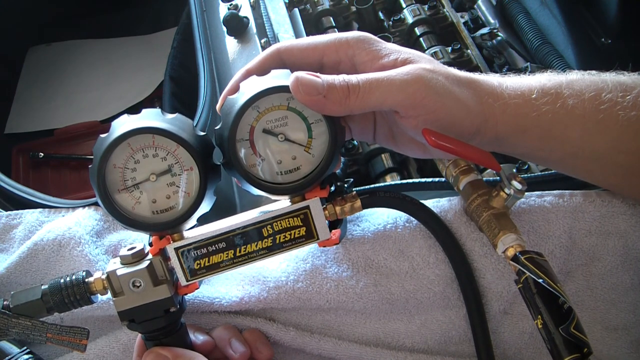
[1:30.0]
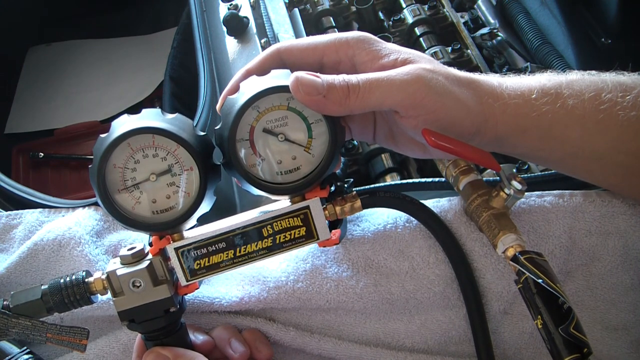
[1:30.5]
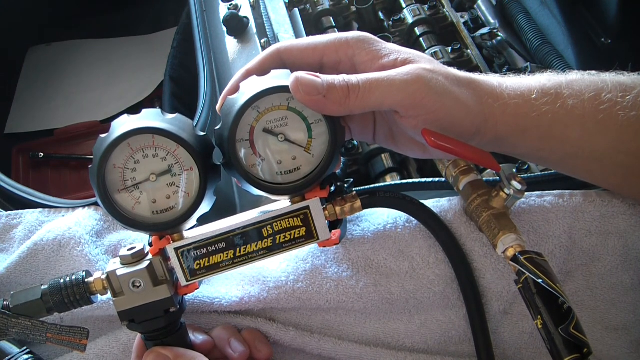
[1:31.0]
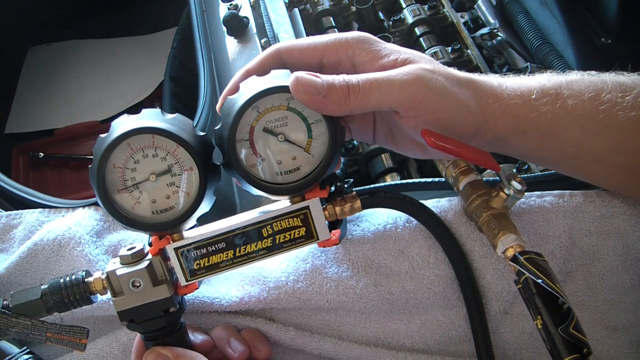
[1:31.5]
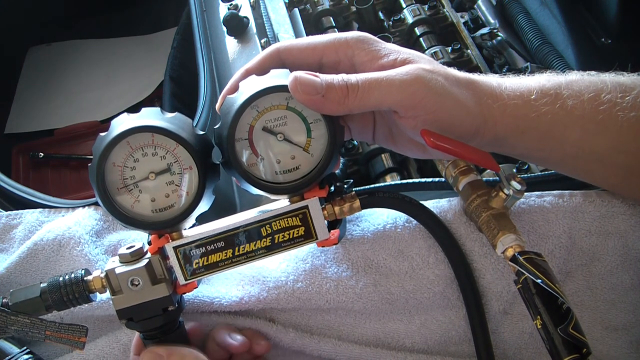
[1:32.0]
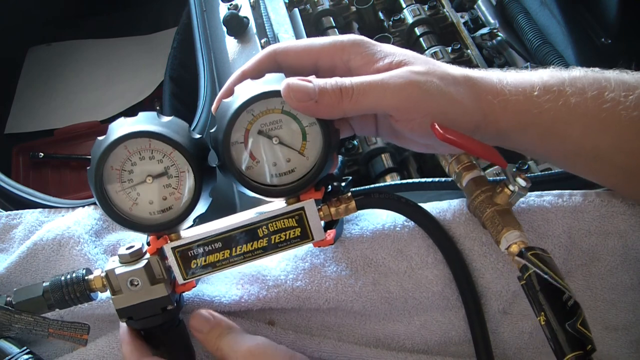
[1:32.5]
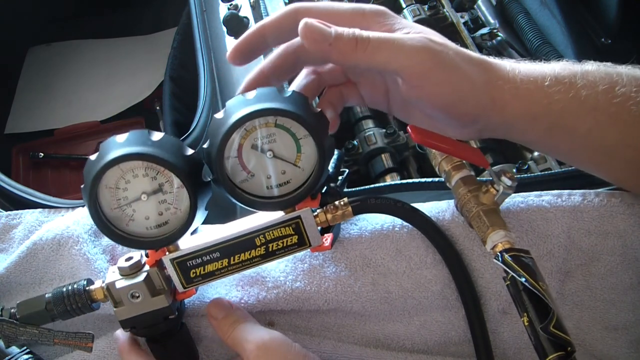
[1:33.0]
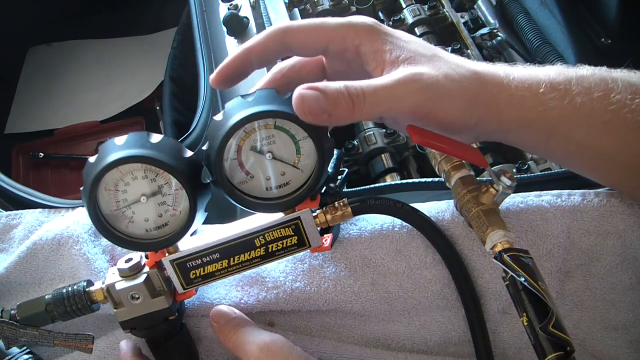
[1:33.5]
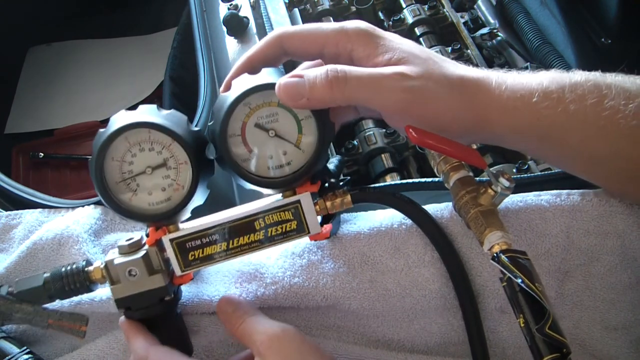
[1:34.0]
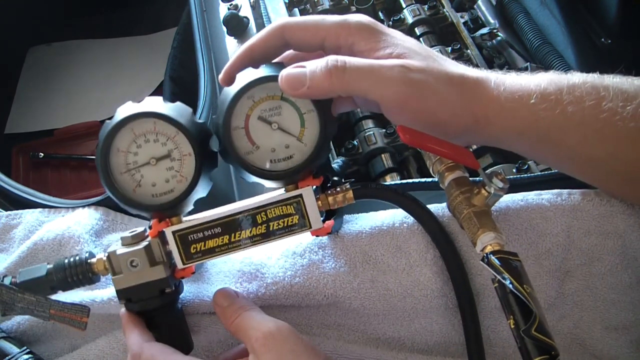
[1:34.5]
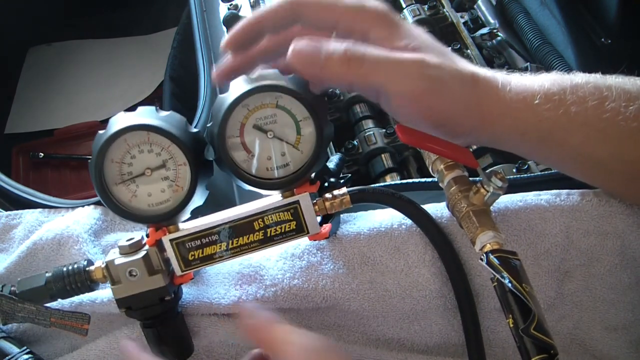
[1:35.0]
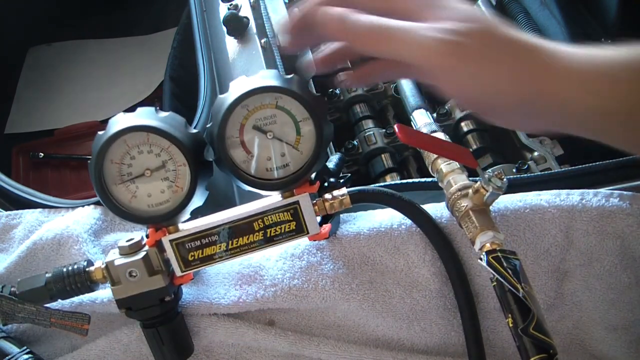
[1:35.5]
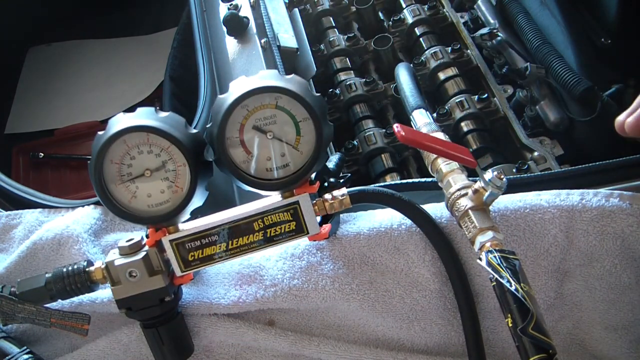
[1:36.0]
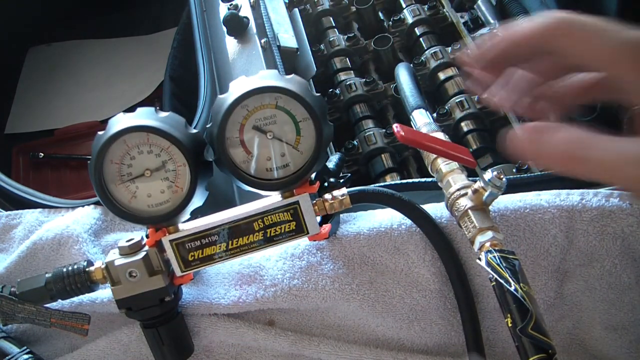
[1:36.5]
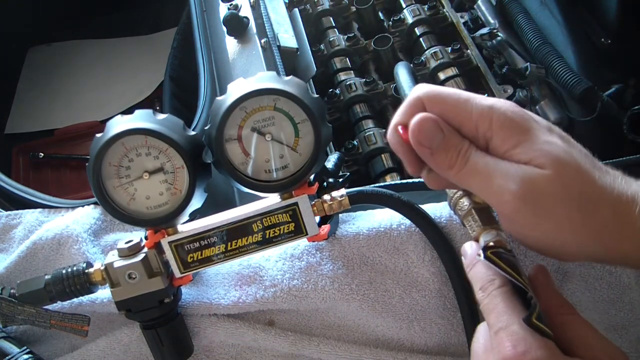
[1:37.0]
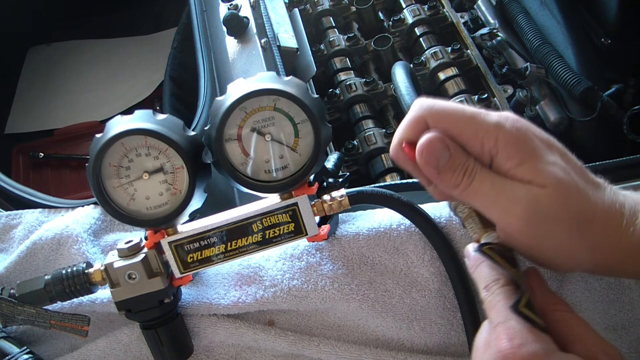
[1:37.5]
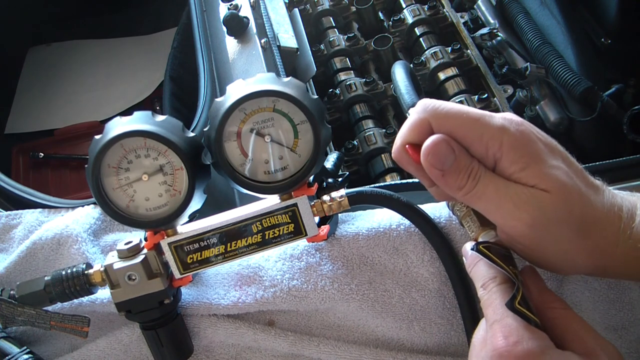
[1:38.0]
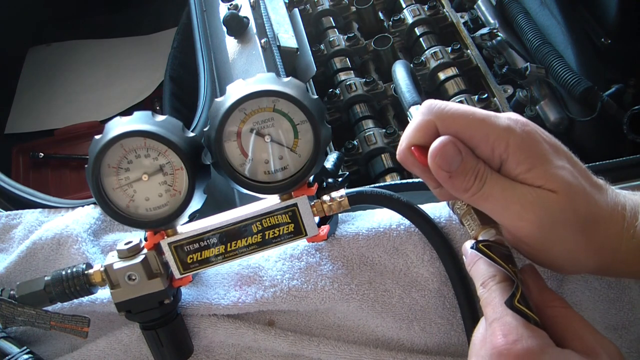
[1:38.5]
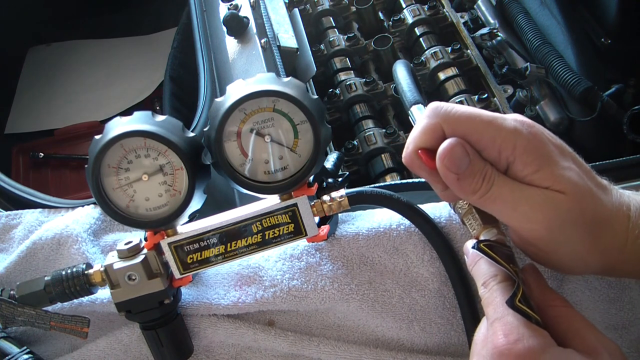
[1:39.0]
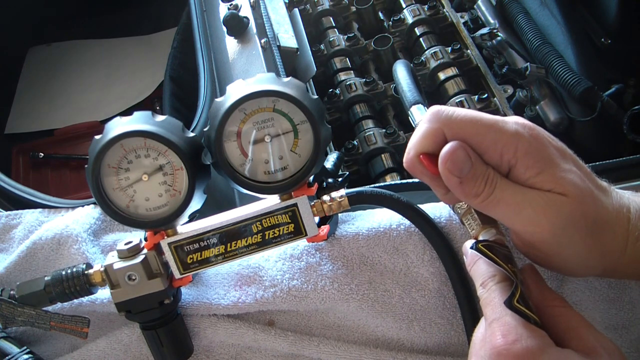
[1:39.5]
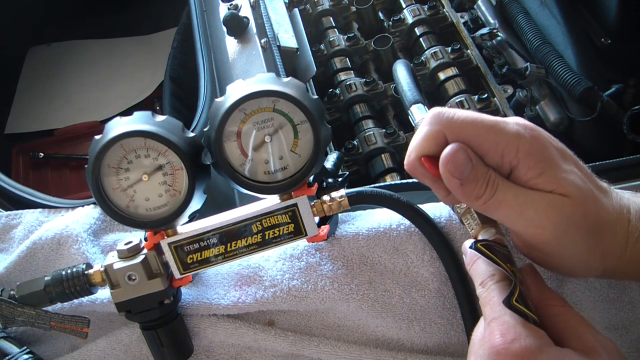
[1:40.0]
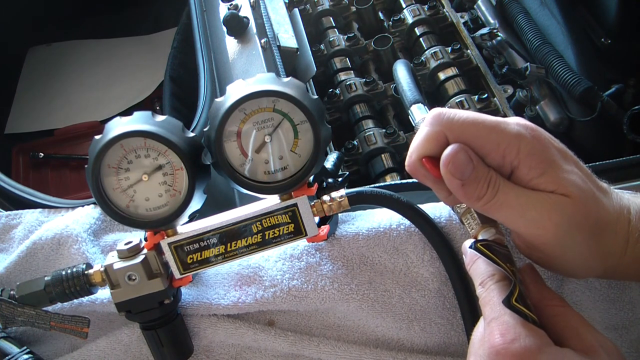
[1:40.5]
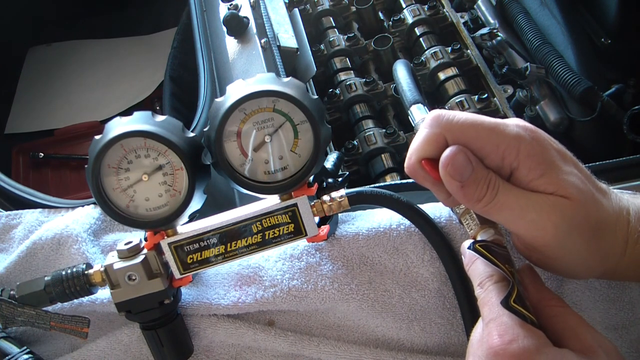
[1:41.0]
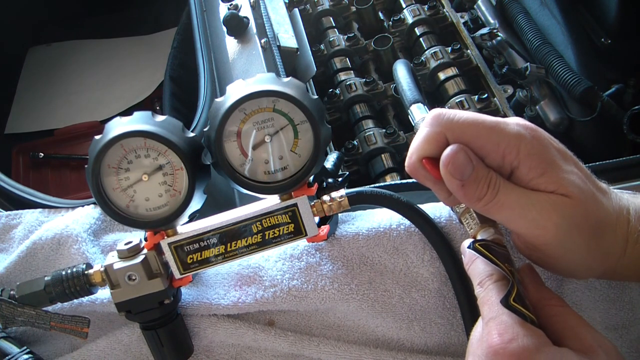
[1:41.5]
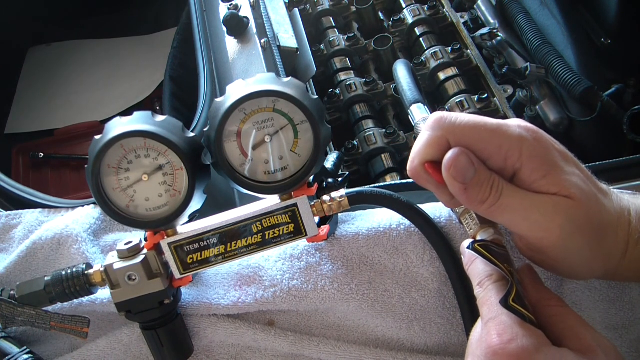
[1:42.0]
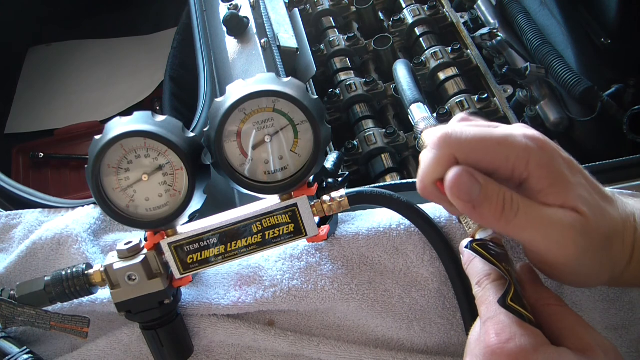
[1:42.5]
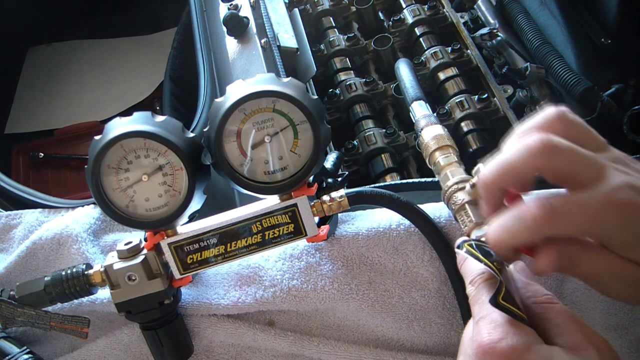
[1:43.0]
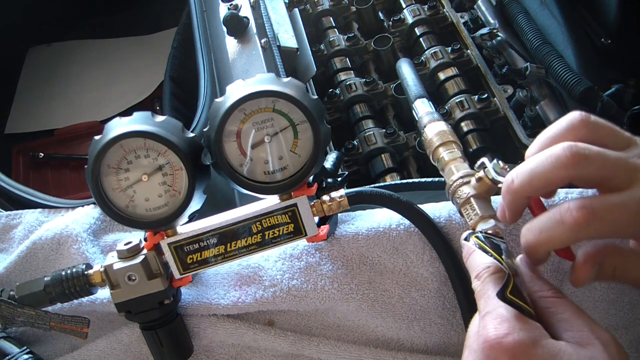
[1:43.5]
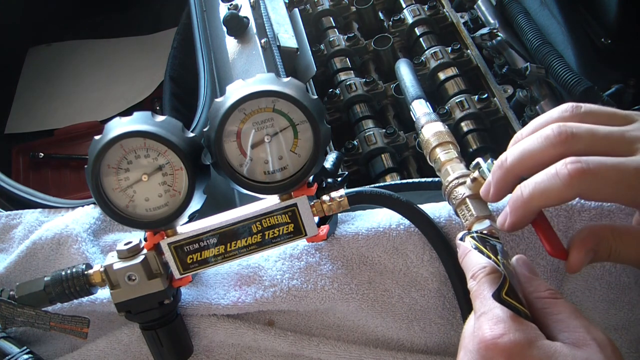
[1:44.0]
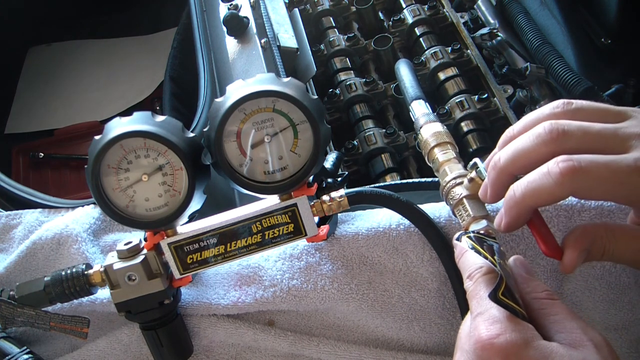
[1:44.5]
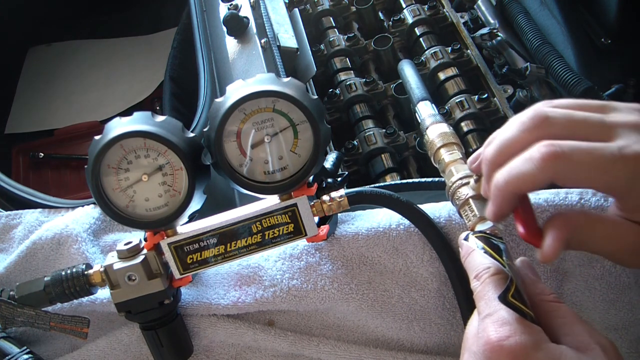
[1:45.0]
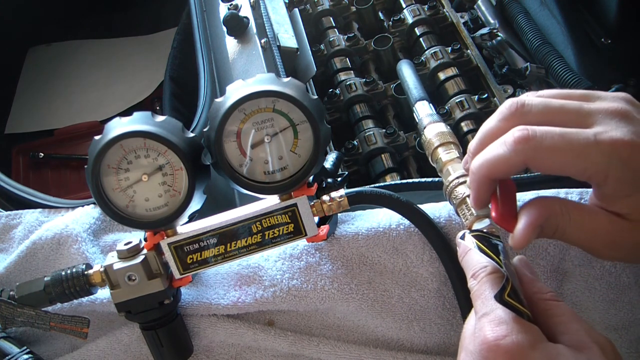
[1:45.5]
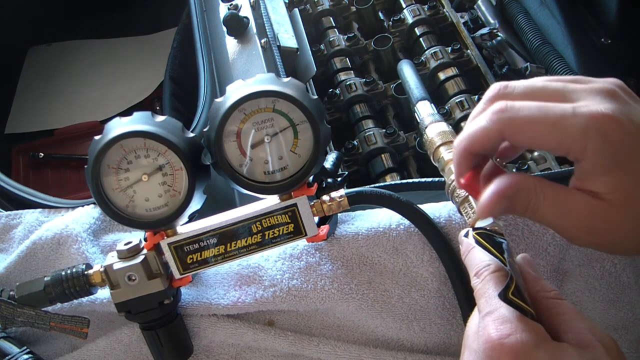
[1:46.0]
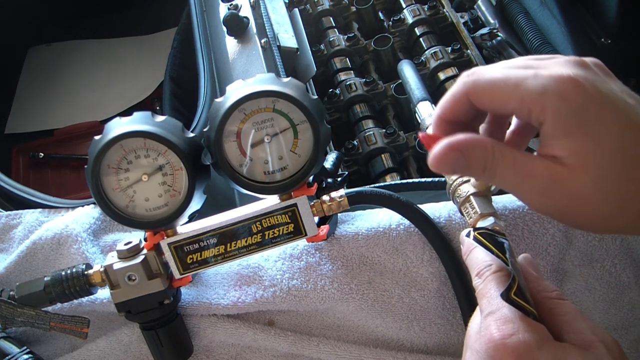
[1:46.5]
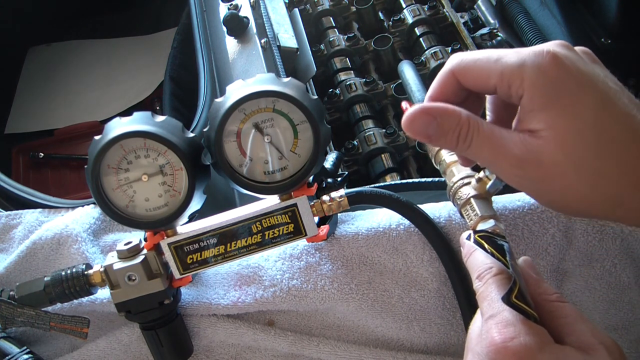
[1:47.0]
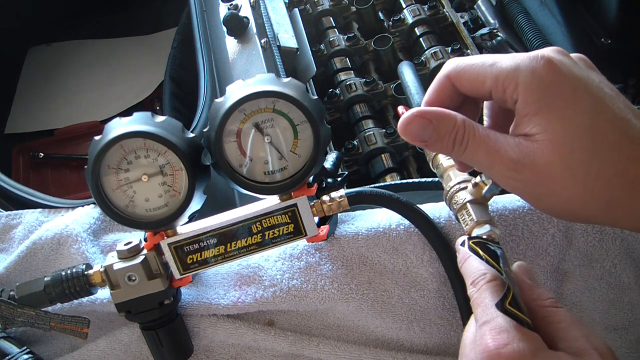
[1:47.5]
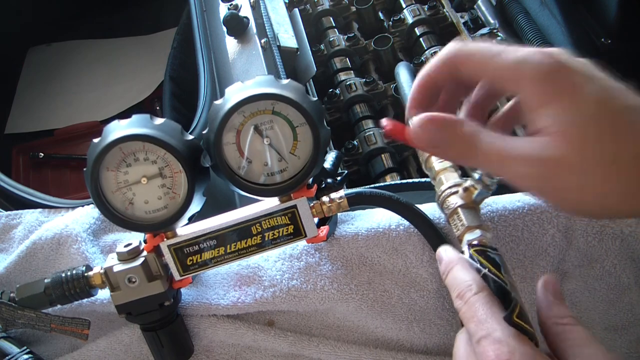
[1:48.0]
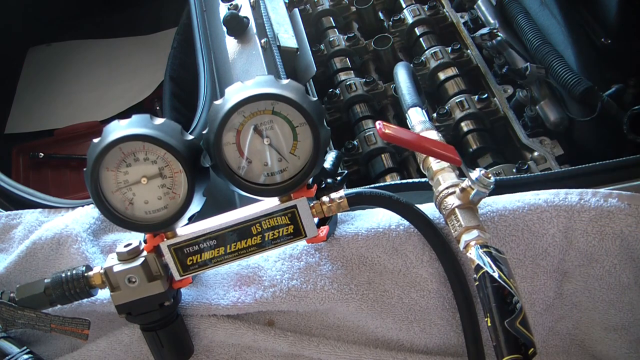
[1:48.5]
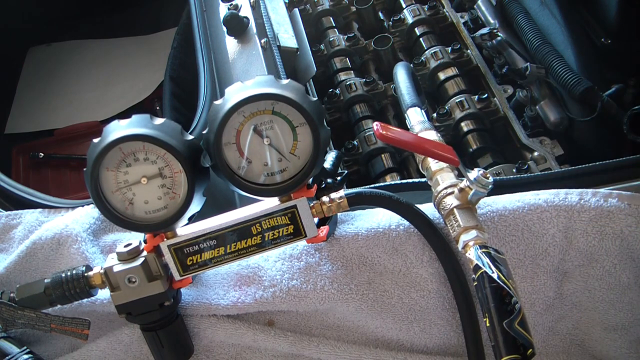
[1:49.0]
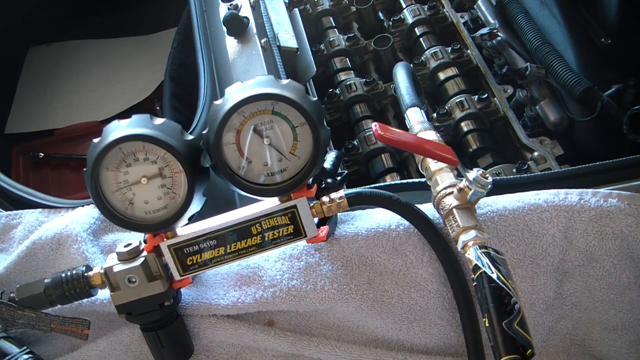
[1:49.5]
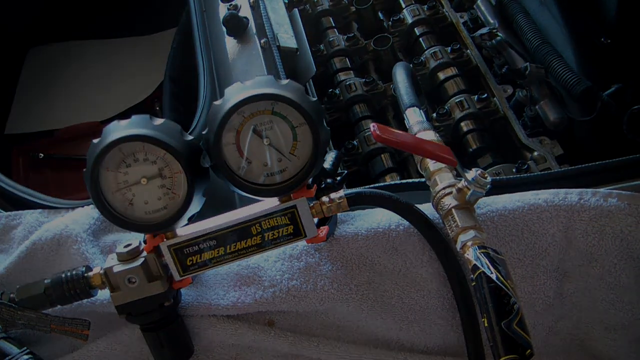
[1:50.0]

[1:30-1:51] A small silver box has two air gauges on top, one on the left and one on the right. On the front of the box is a black label with "US General Cylinder Leakage Tester" written in yellow. Two black hoses come off the ends of the box. Behind the tester is the row of cylinders. The tester is on a white towel, and to its right the end of the hose goes into the red handle. Somebody's hand, from the wrist down, holds one of the gauges on top of the tester, then moves down to the red handle and slowly pulls it down, and the needle in the second gauge moves a little. He then slowly moves the handle back all the way up, and the needle goes all the way to full, to 100, apparently indicating a leak in one of the cylinders.